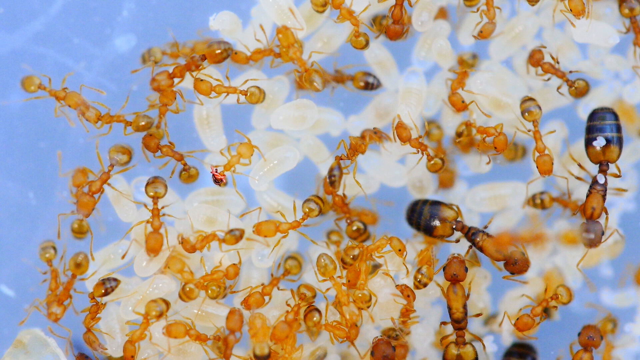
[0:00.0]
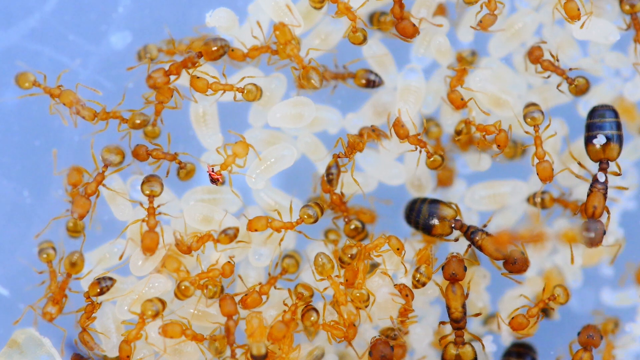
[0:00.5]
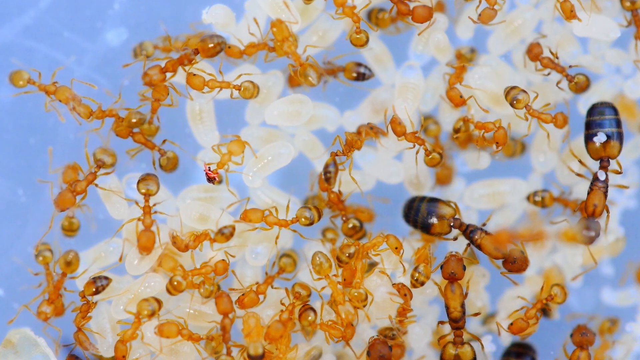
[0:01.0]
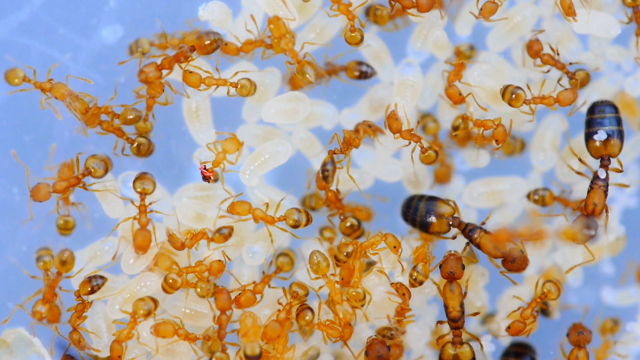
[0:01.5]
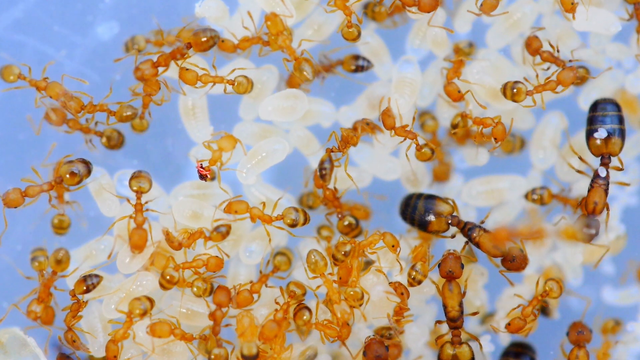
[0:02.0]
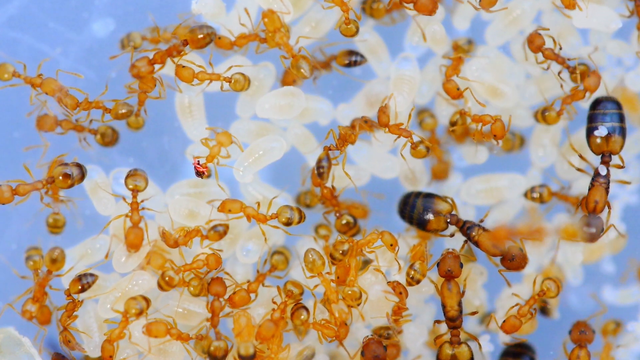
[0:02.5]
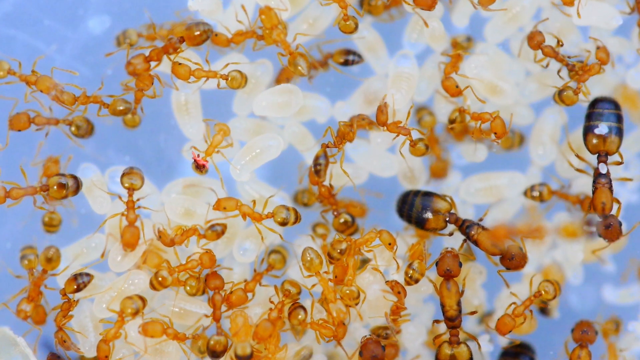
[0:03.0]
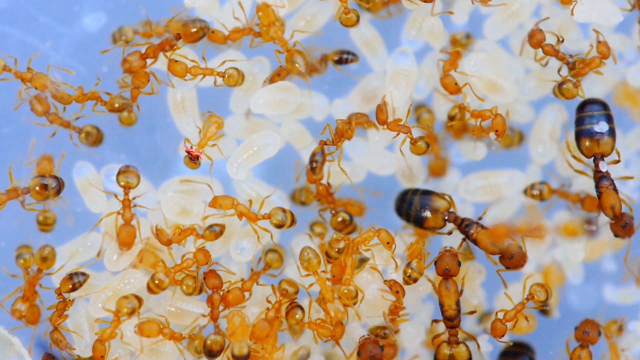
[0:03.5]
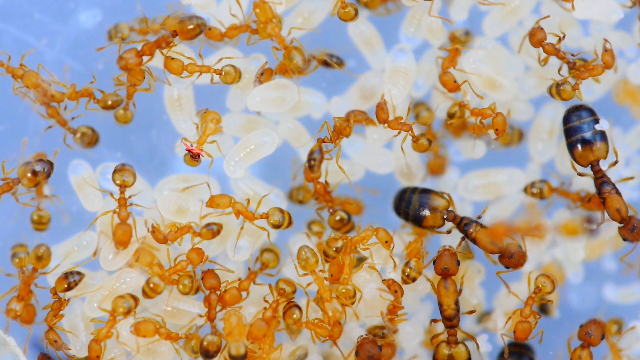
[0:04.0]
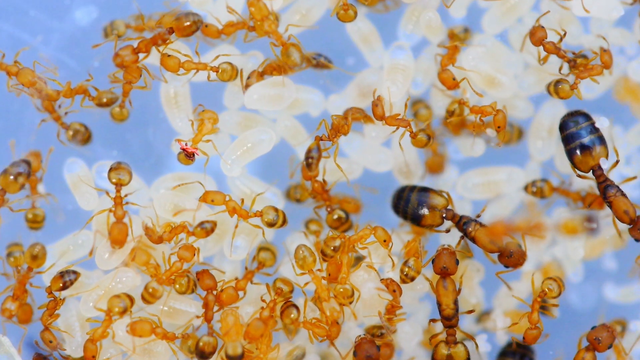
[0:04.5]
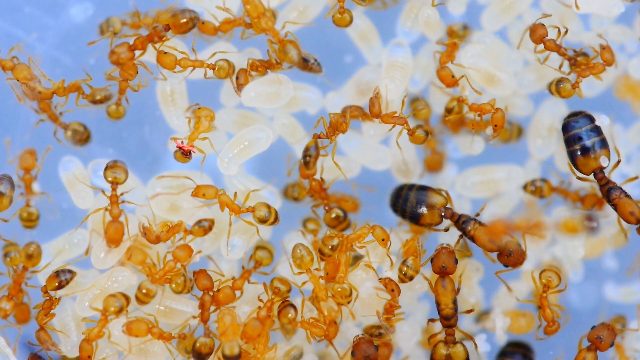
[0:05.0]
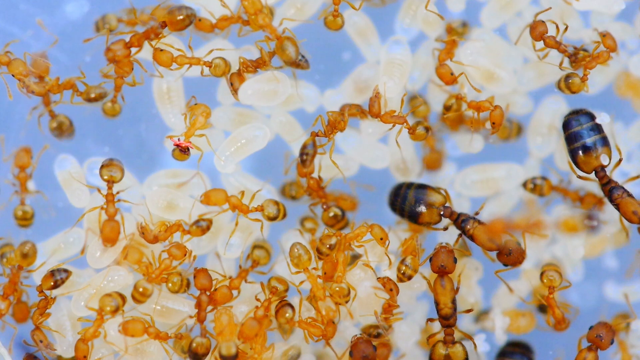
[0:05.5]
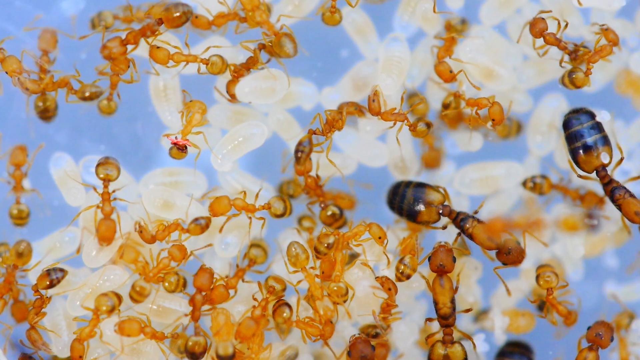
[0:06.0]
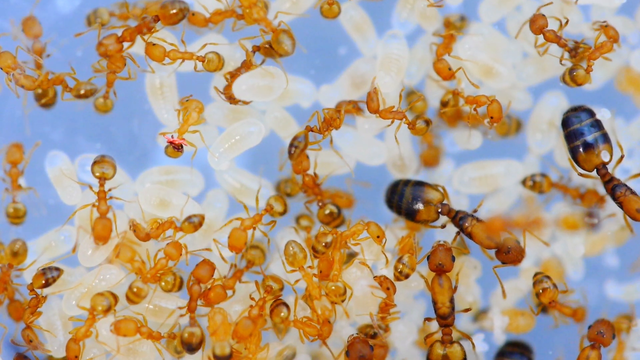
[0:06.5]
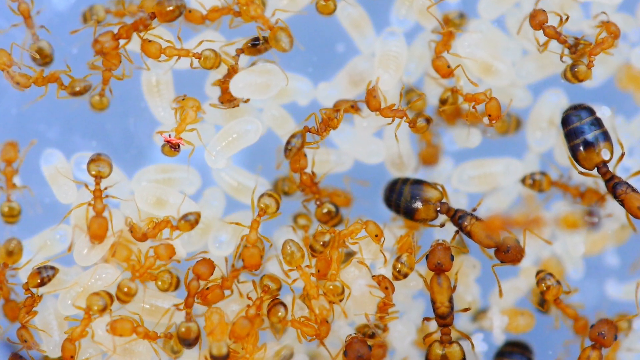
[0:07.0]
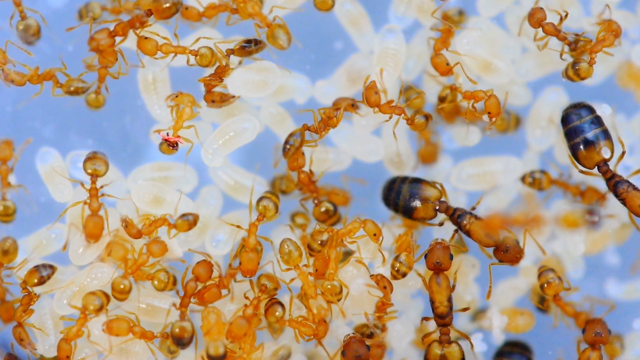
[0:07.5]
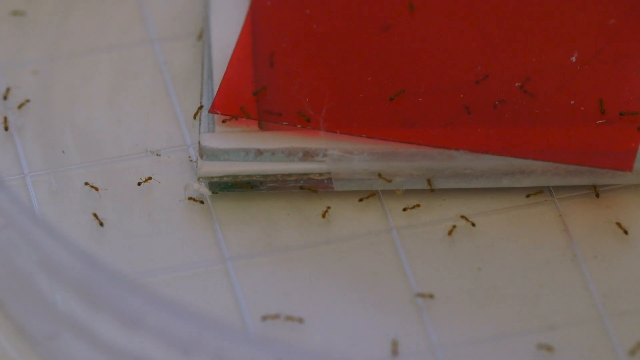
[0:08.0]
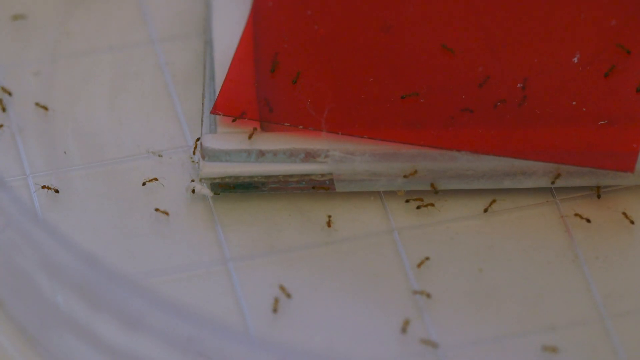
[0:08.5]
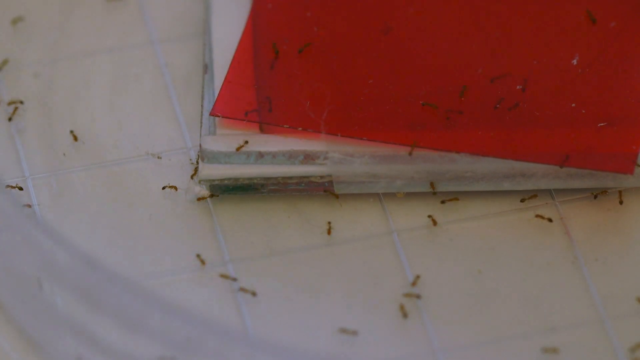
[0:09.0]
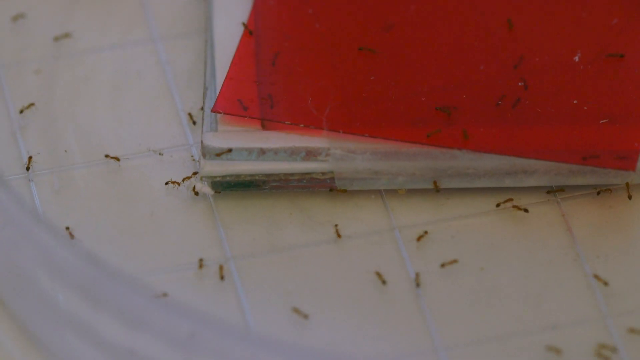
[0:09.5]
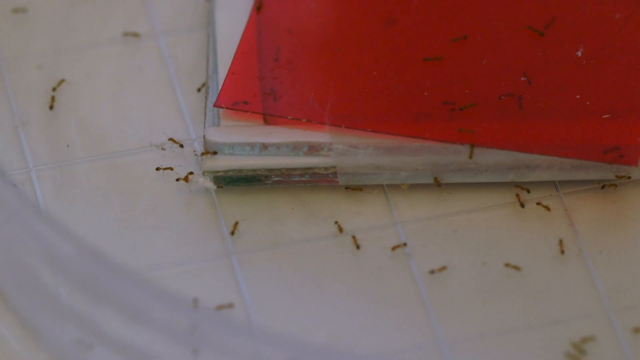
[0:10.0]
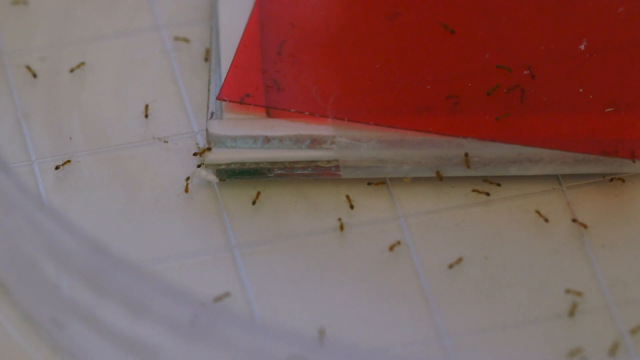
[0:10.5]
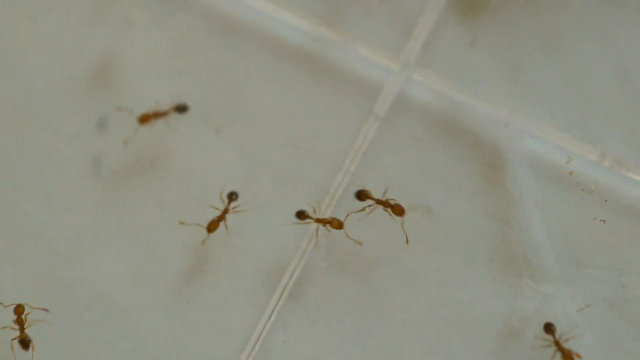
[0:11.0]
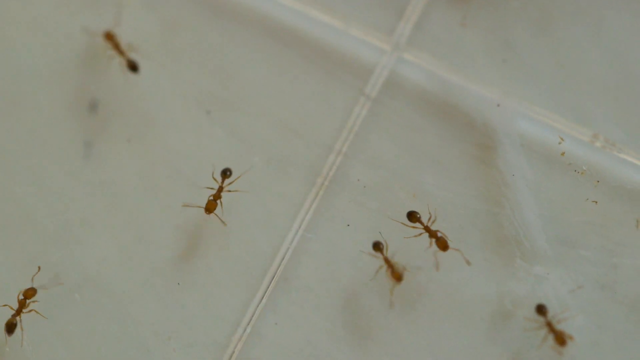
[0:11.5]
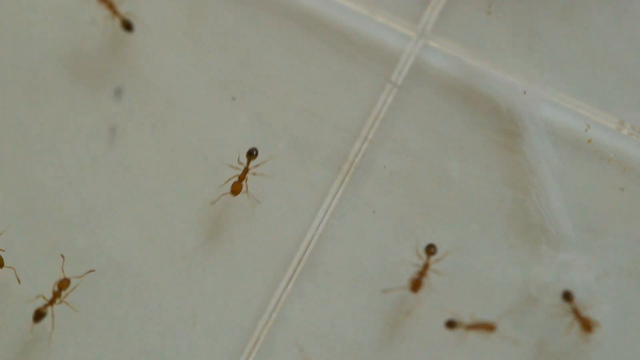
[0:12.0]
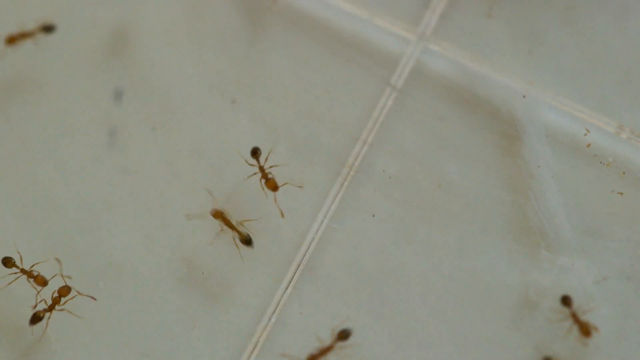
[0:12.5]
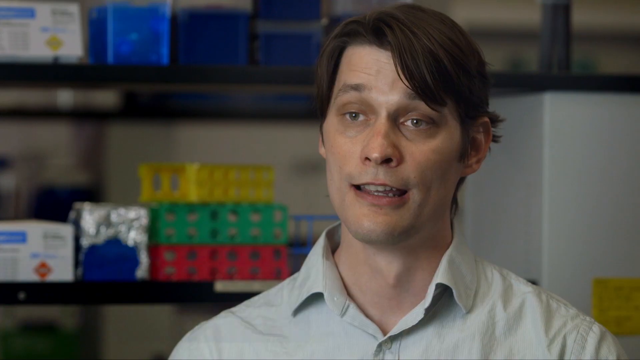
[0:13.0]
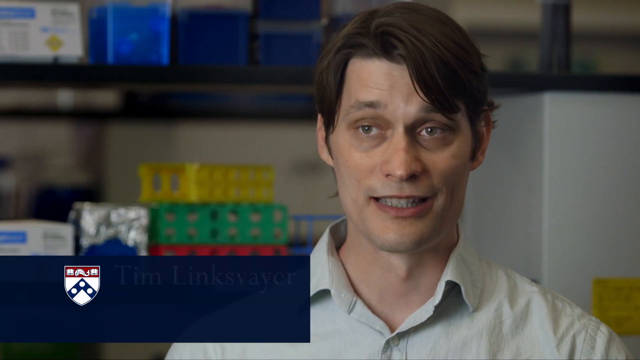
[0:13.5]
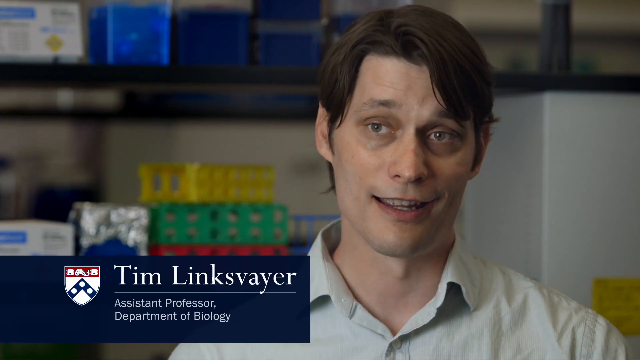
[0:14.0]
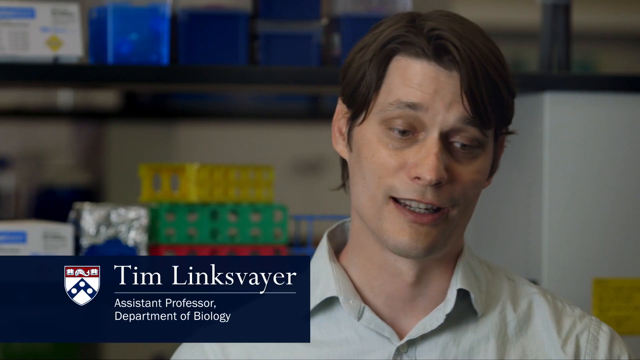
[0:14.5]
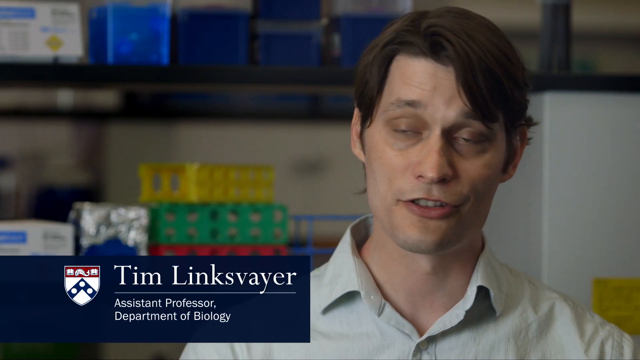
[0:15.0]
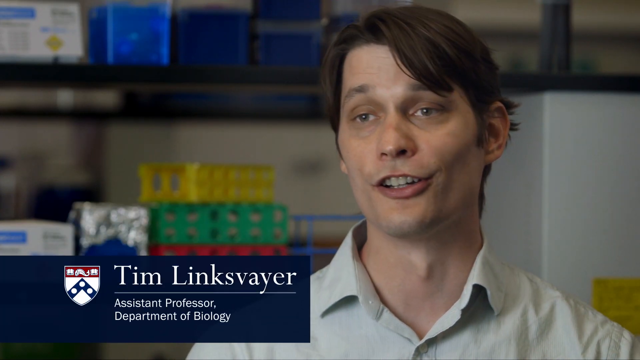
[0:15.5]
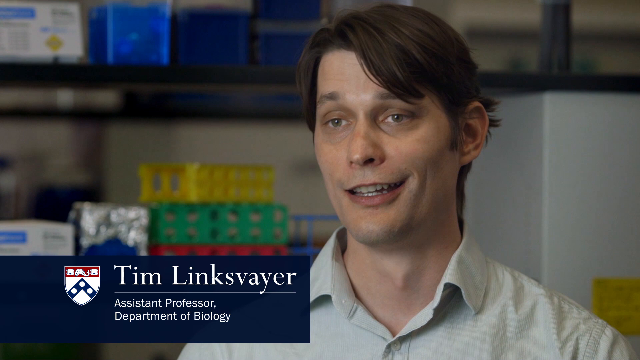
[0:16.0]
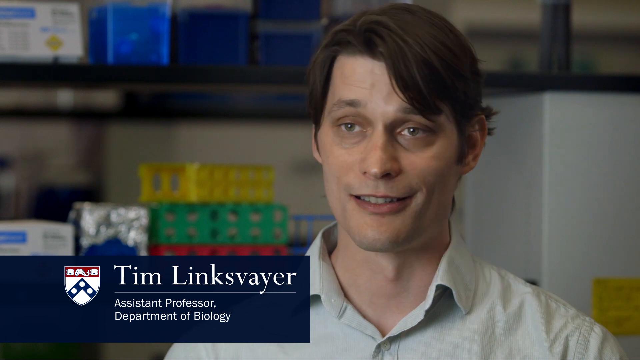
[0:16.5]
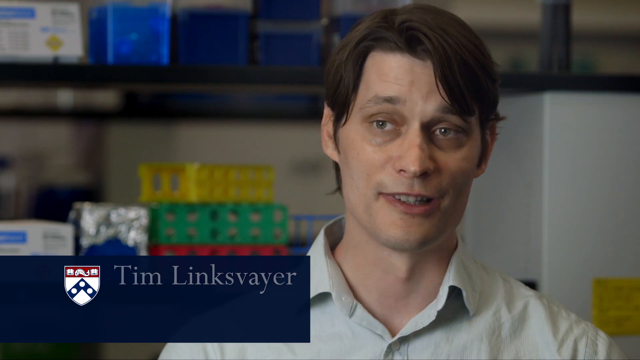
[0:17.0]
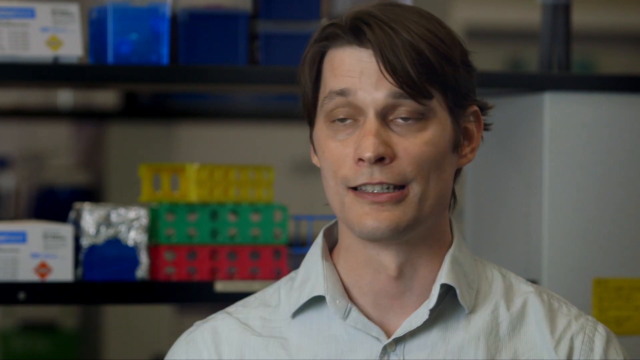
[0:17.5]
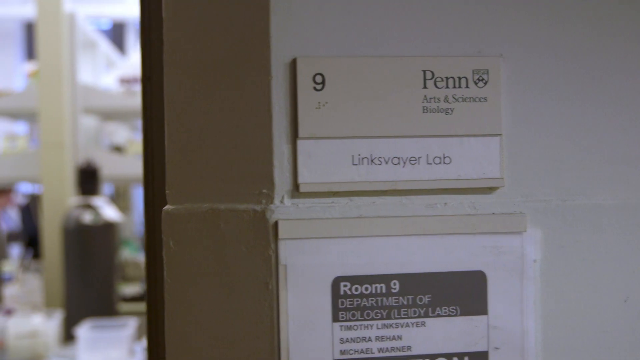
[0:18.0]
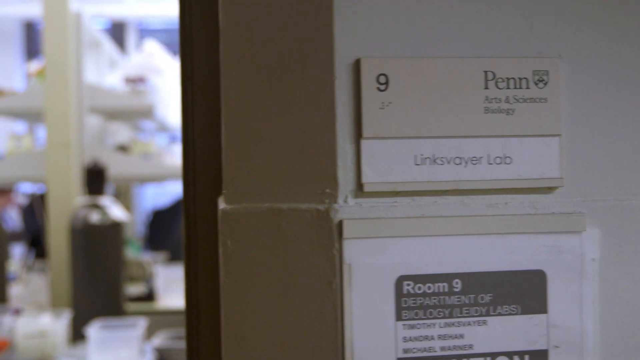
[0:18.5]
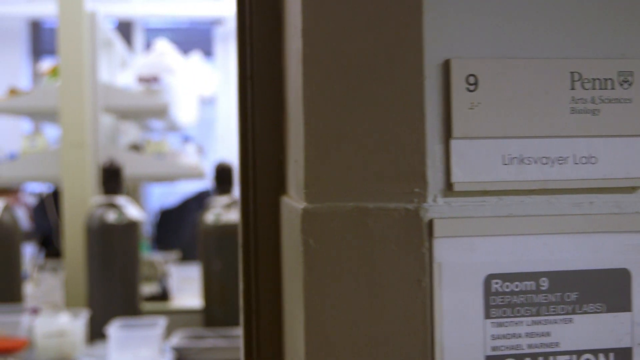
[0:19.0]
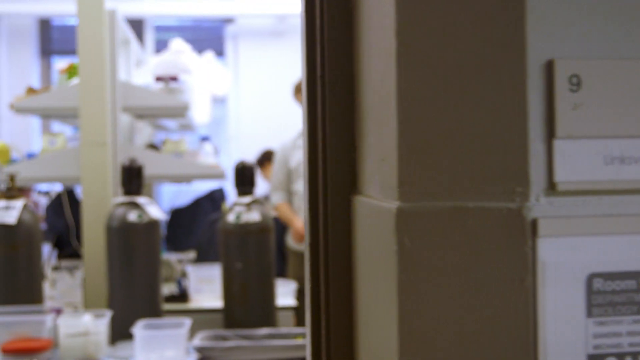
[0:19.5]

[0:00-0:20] An overhead shot shows numerous ants that are gold in color, almost translucent. They move mostly their antennae and legs without making much other motion, on top of a clear blue background with what looks like white eggs laid over it. Some of the ants have swollen back sacs banded with darker blue. The ants are agitated as they move. The camera pans in more closely on them. The image then switches to a picture from above of a bunch of darker ants crawling all over a surface. In the center of the surface is a pile of papers, and on top of these is a red translucent notebook cover. The camera moves to a close-up showing six ants in the center; from here their bodies look red, their back ends have bulbous dark shapes, and they are on a tiled tabletop. Next comes a man on the right-hand side of the screen. He has dark hair with his bangs swept over his left eye, looks at the camera, and wears a tan shirt with an open collar. In white print on blue in the lower left-hand corner, text reads "Tim Linksvayer" with a university logo, and "Assistant Professor, Department of Biology." A door is shown with text on it reading "Penn, Arts and Sciences, Biology, Linksvayer Lab, Room 9."